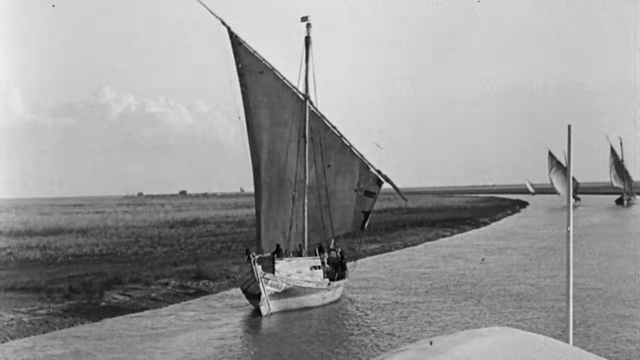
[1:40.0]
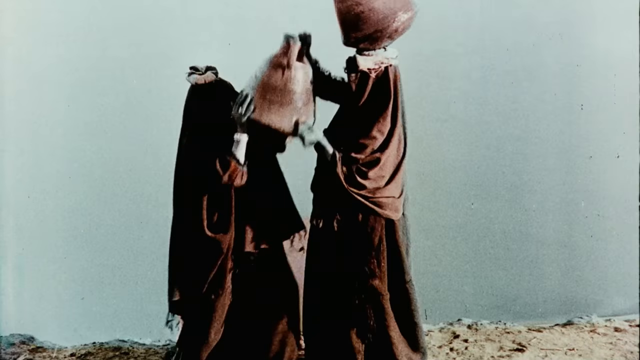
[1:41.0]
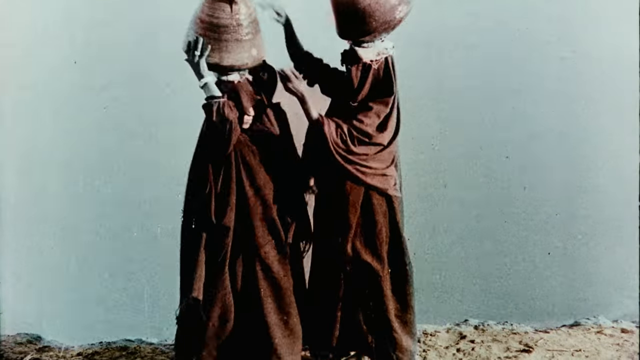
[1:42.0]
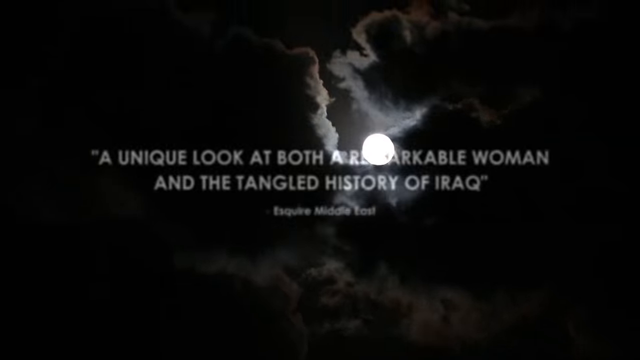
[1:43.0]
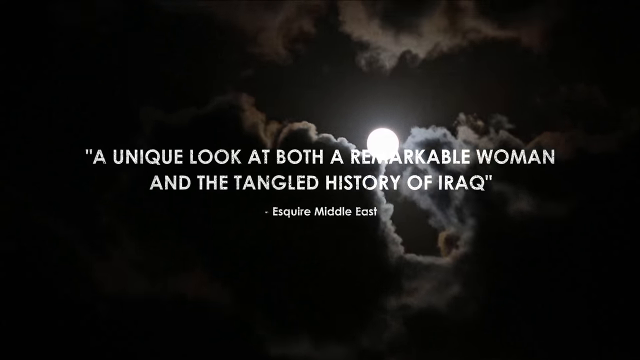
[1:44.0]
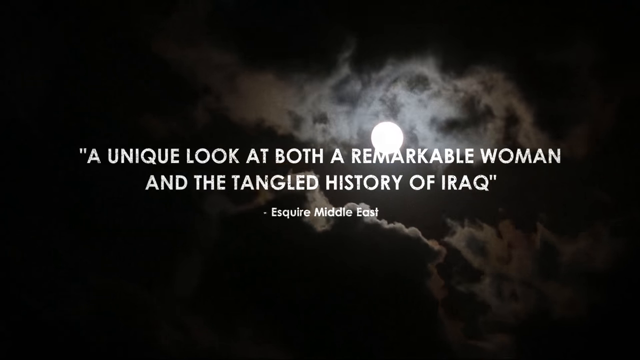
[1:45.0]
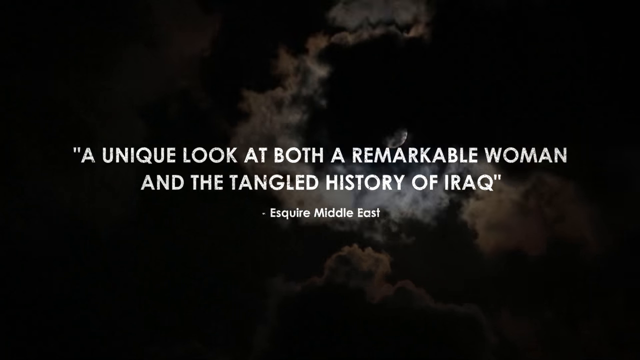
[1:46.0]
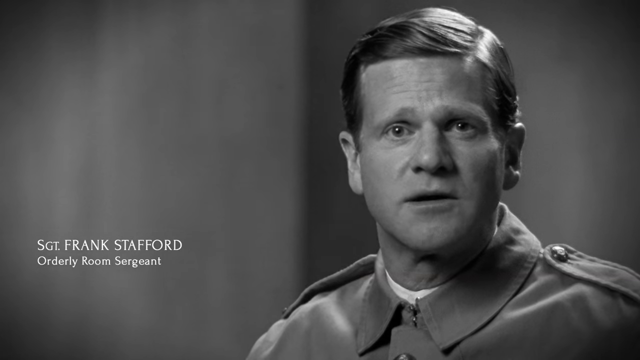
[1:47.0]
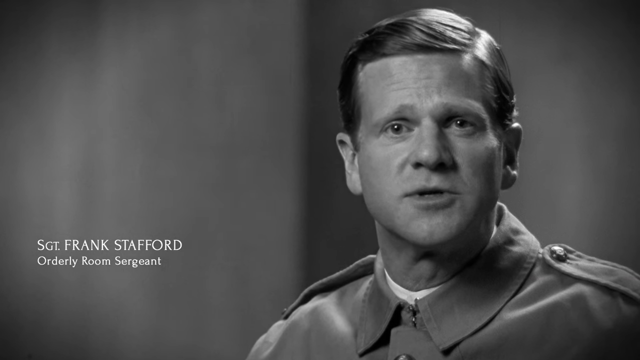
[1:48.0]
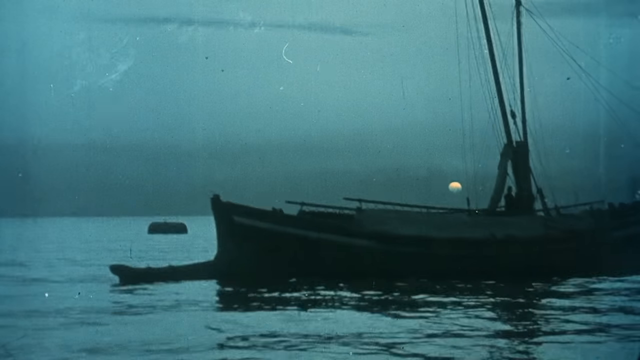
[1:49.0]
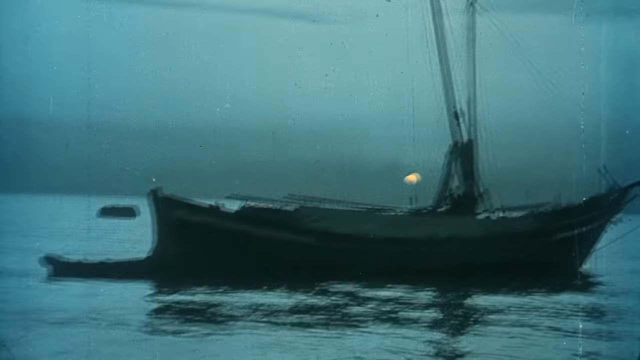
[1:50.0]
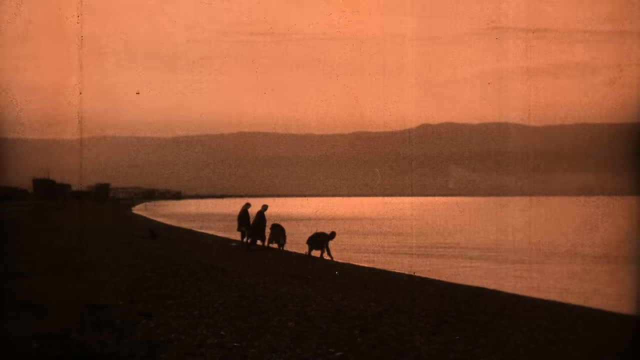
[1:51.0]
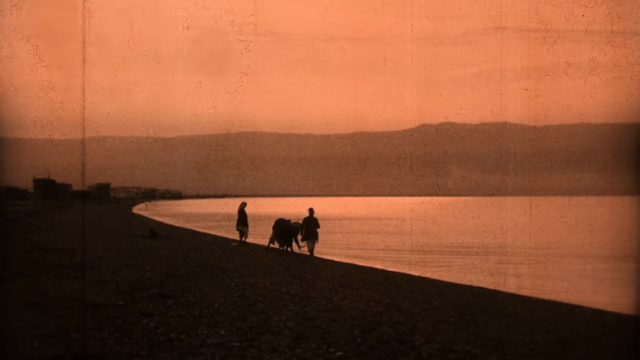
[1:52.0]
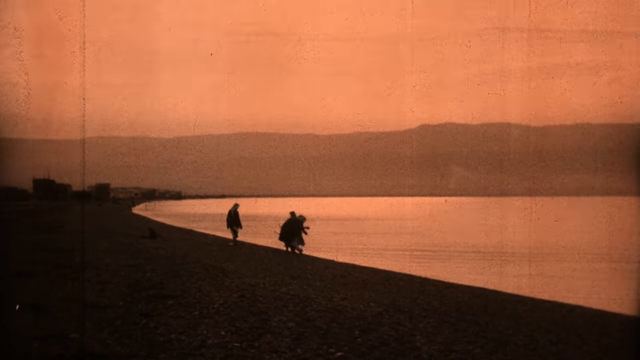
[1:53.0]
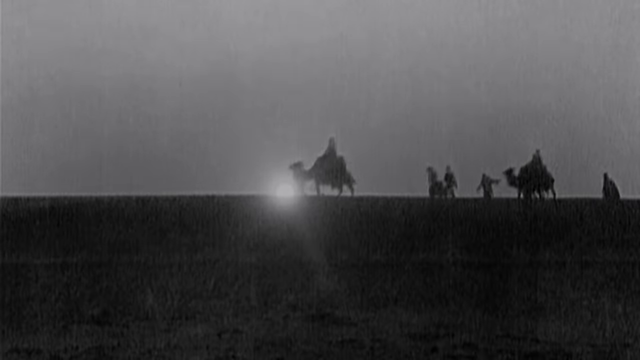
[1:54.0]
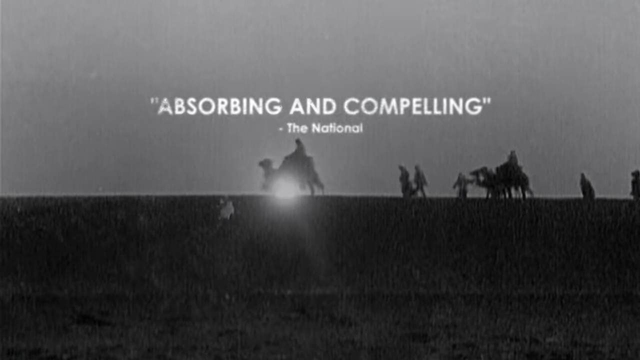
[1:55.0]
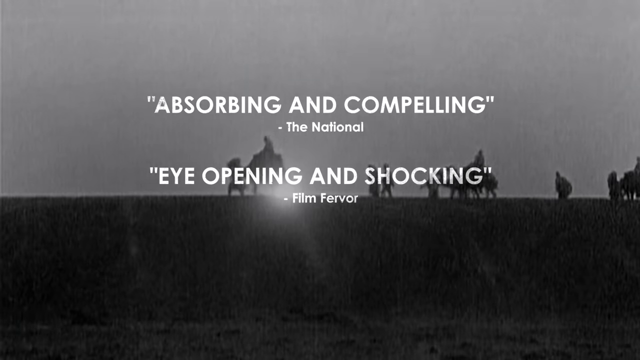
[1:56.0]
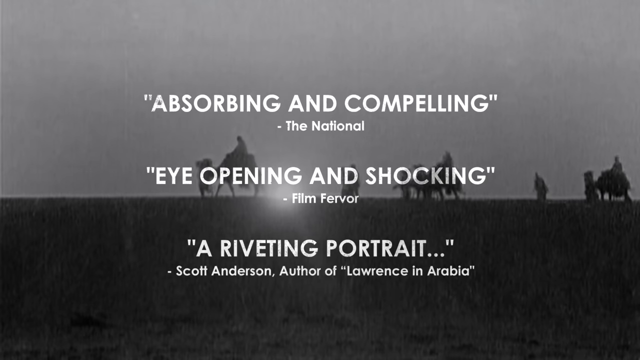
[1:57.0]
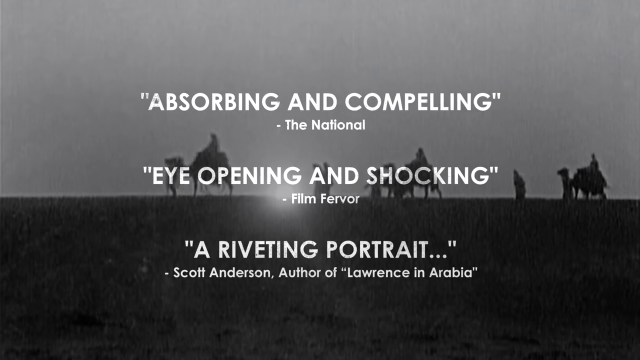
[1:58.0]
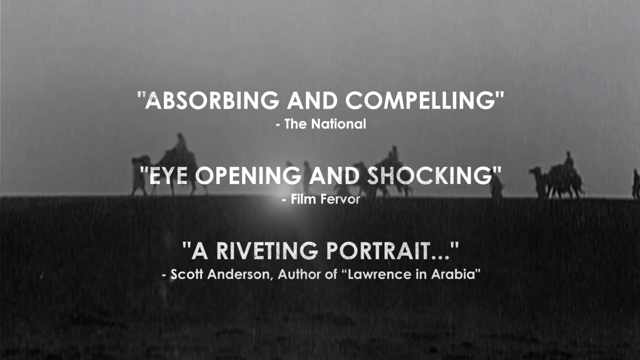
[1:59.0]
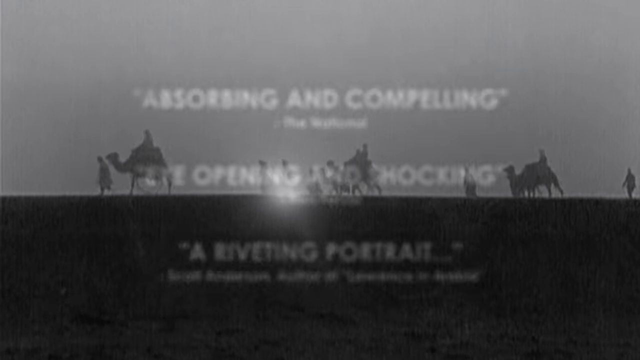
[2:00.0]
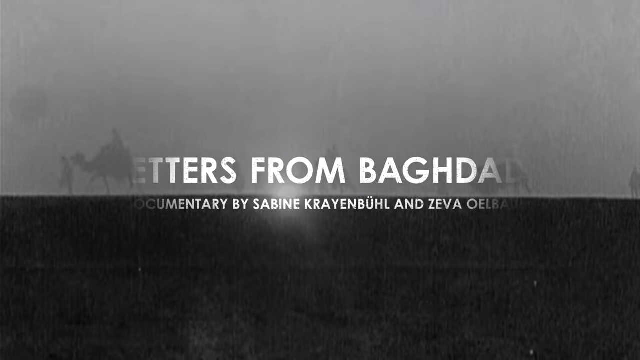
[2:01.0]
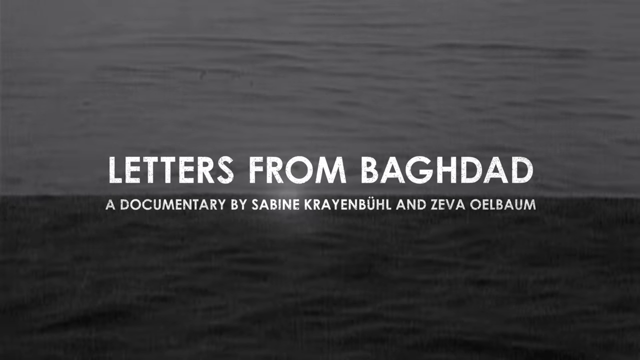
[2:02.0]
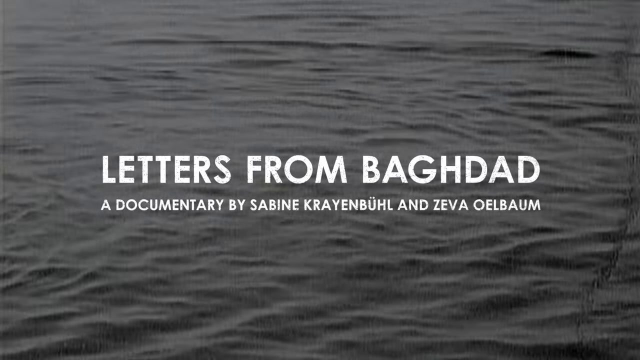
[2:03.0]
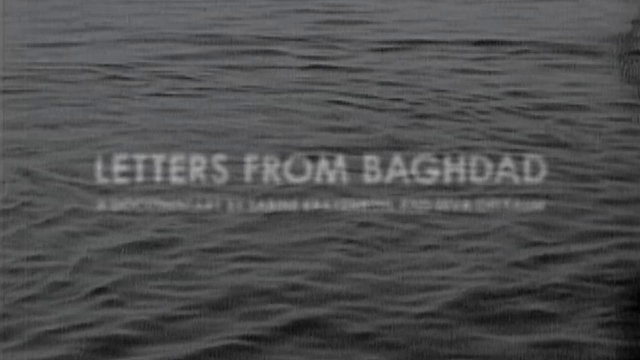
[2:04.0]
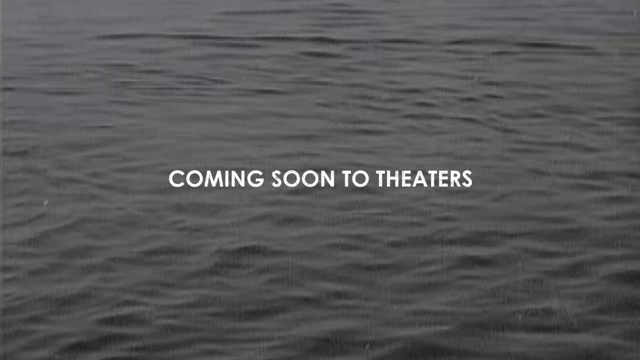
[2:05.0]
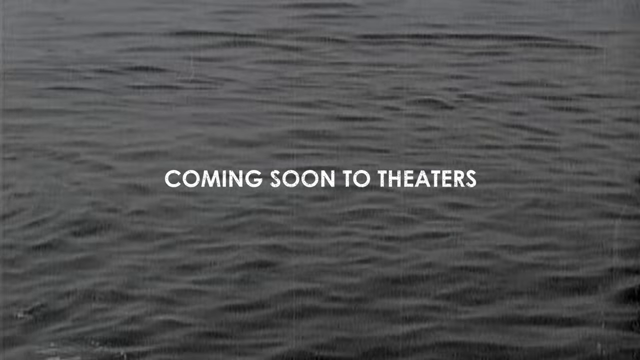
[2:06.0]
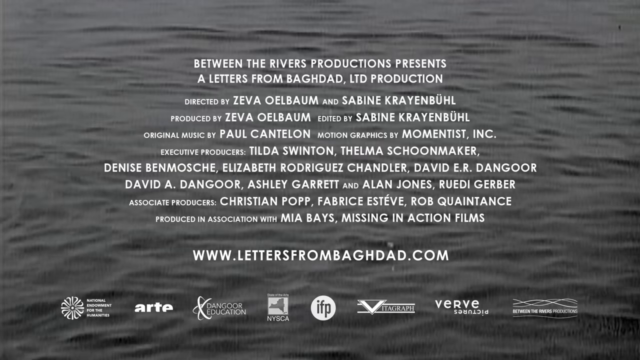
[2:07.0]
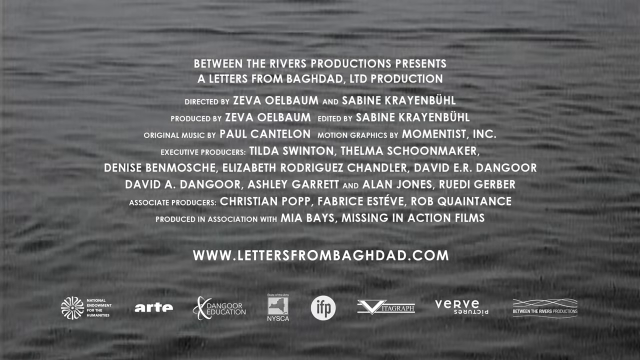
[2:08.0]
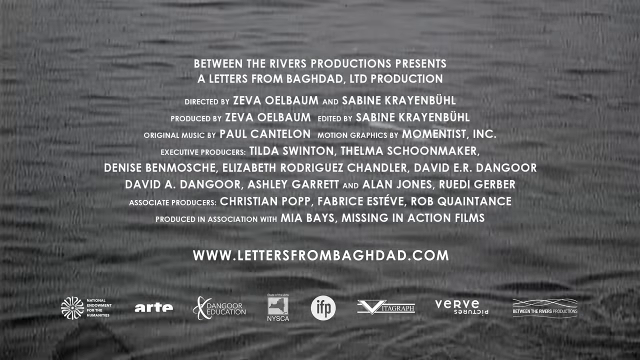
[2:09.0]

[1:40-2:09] In faded color, like the beginning of the color film era, two Muslim women covered completely from head to toe except for their hands appear to be gathering water and clay pots, then place them atop their heads. The scene changes to a dark night sky with a full moon lighting portions of the clouds a light gray, with text over it reading "a unique look at both a remarkable woman and the tangled history of Iraq. Esquire Middle East." Next is a sunset, with a yellow sun on the horizon and a still hazy blue sky; on a waterway, a sailboat constructed mainly of wood is docked or pulled up onto the shore. Desert scenes follow with silhouettes of people appearing to do normal activities, some riding camels. The video ends on the sunset and a body of water with text that reads "Letters from Baghdad. documentary. Coming soon to theaters."